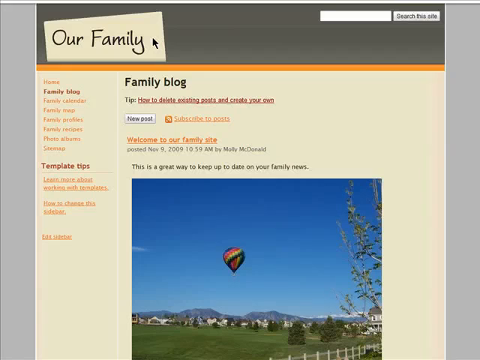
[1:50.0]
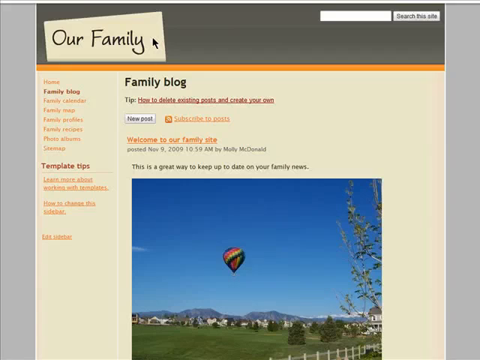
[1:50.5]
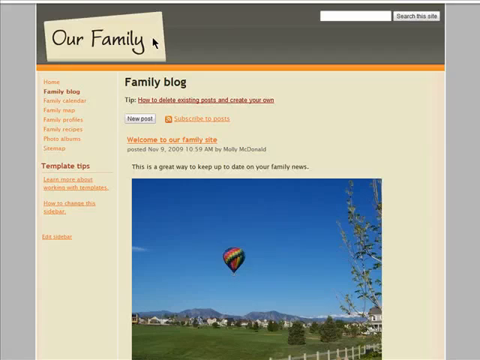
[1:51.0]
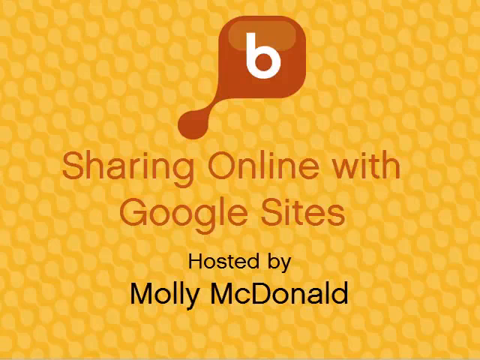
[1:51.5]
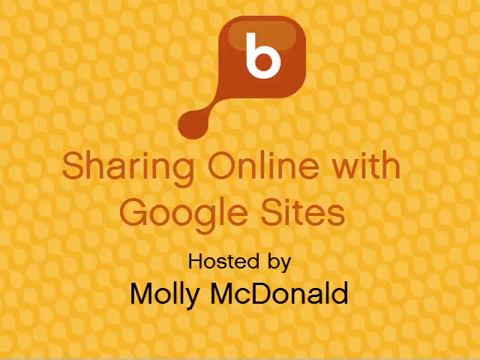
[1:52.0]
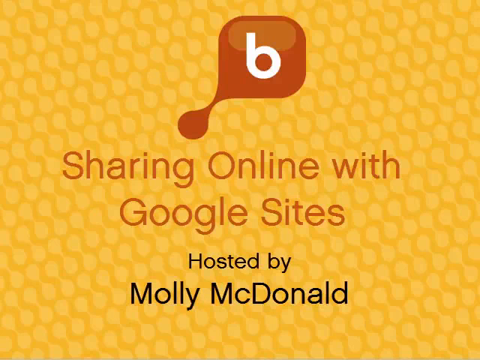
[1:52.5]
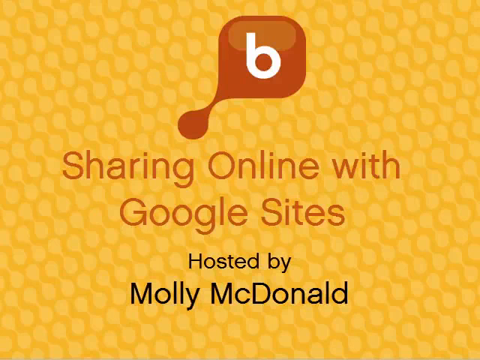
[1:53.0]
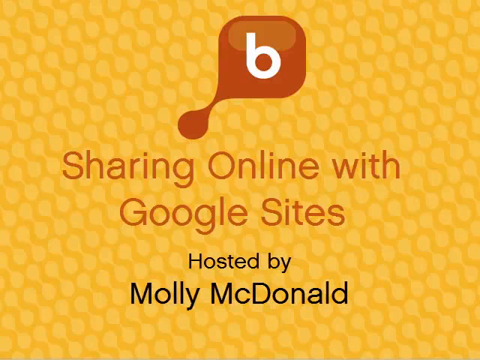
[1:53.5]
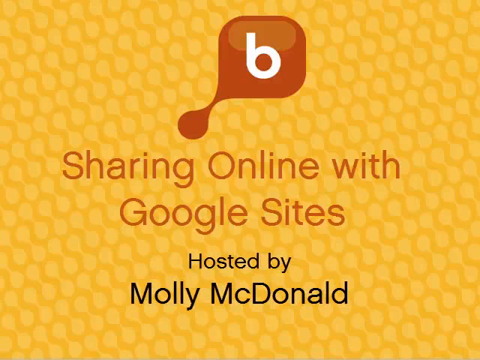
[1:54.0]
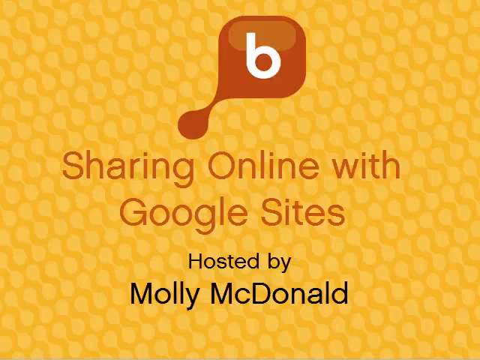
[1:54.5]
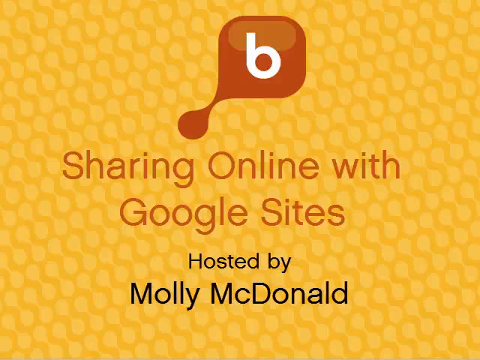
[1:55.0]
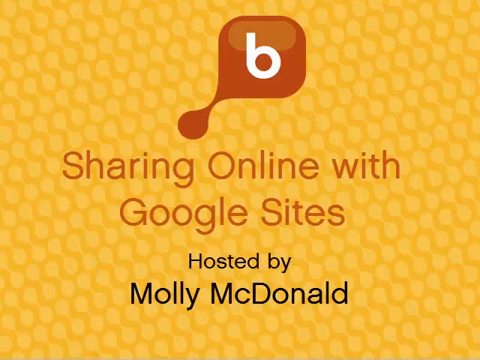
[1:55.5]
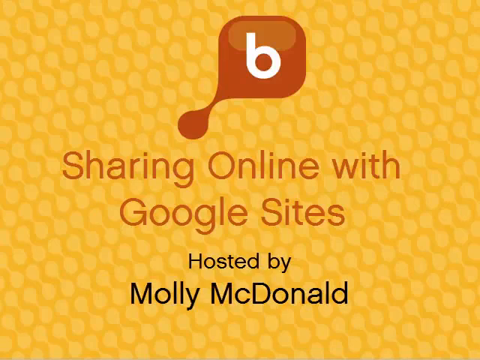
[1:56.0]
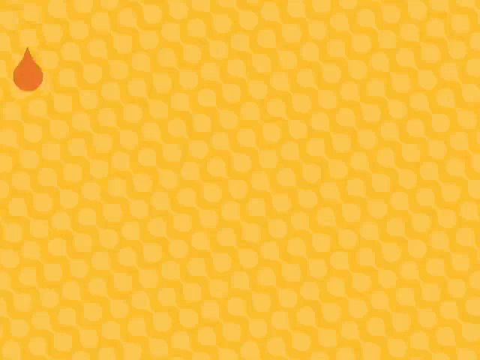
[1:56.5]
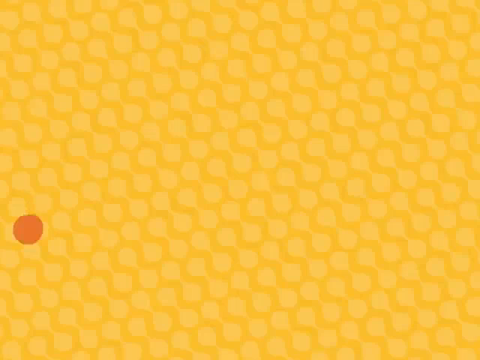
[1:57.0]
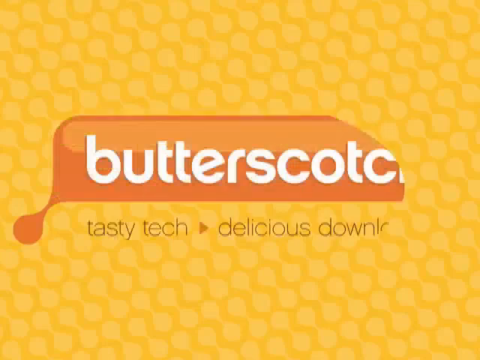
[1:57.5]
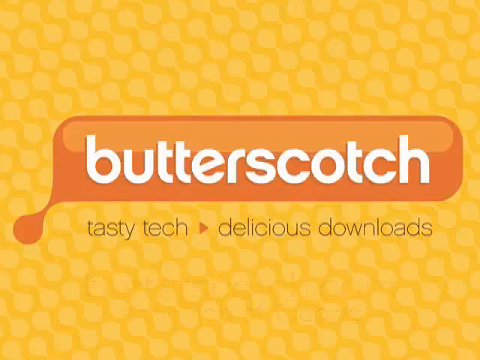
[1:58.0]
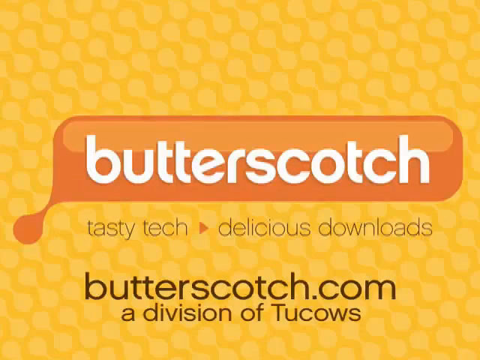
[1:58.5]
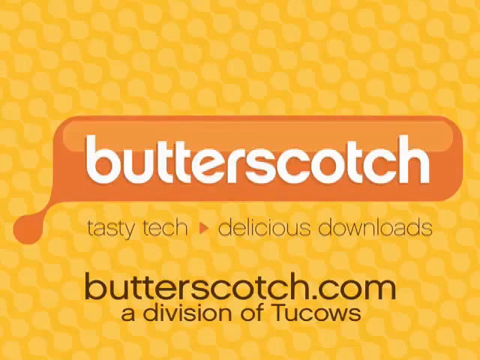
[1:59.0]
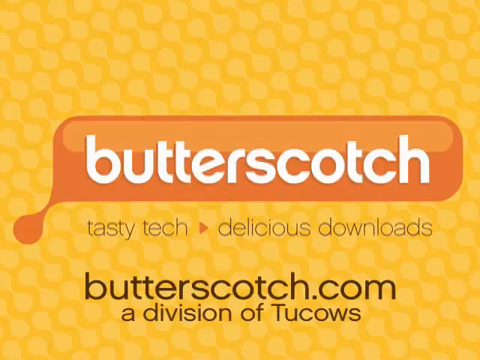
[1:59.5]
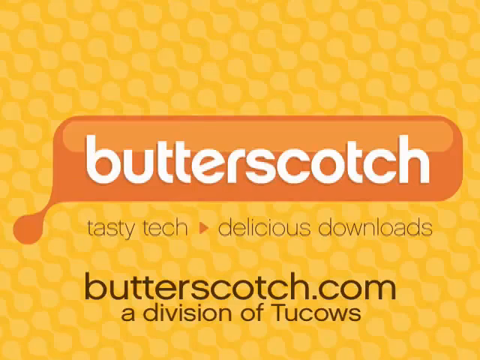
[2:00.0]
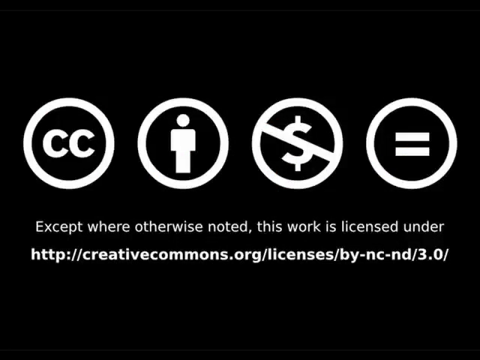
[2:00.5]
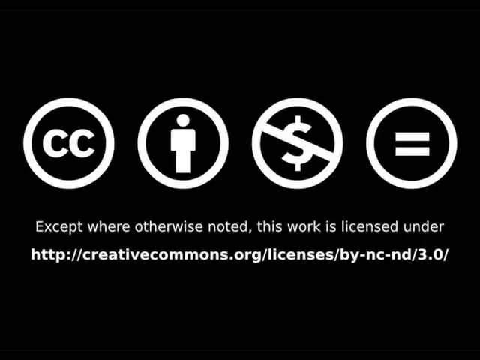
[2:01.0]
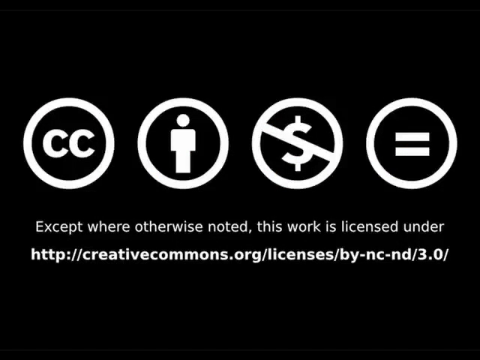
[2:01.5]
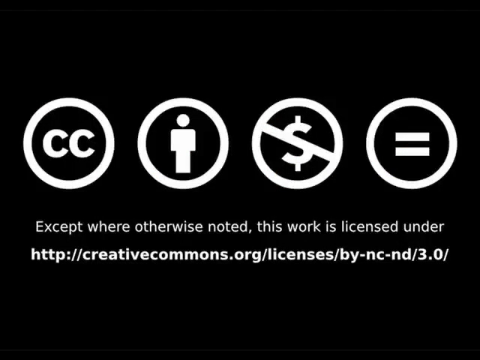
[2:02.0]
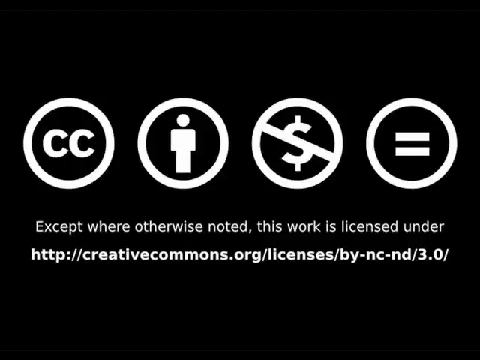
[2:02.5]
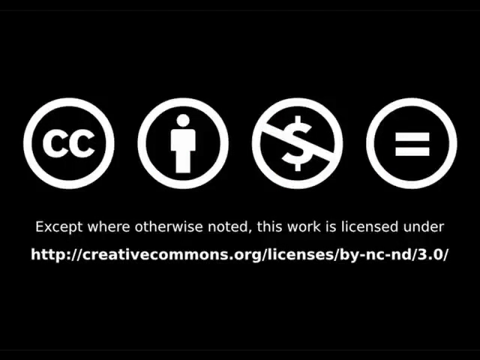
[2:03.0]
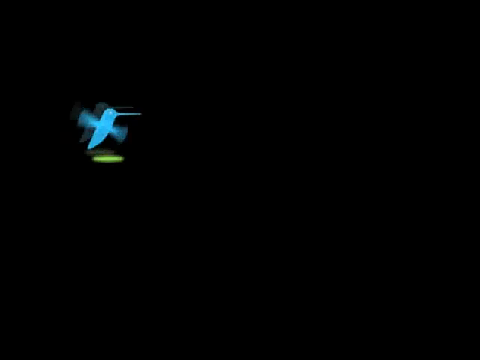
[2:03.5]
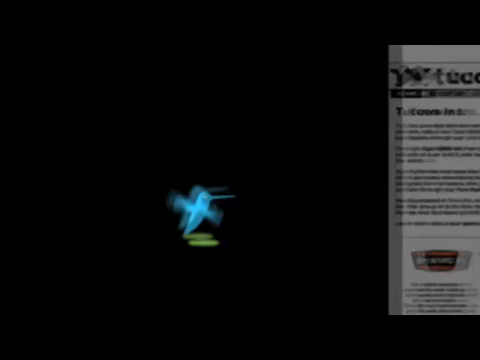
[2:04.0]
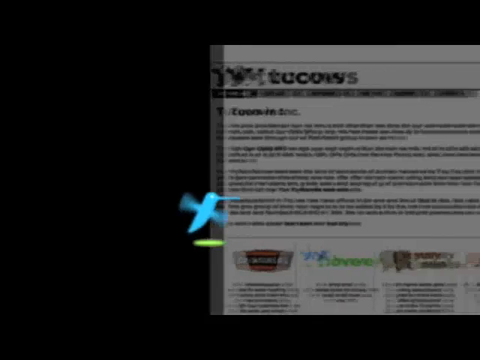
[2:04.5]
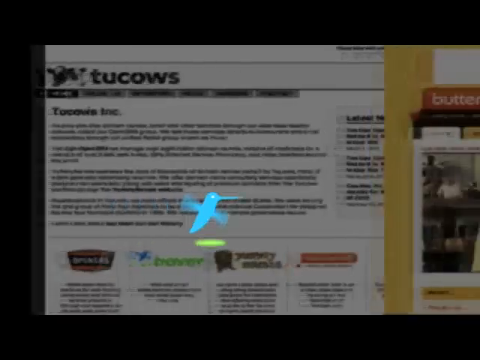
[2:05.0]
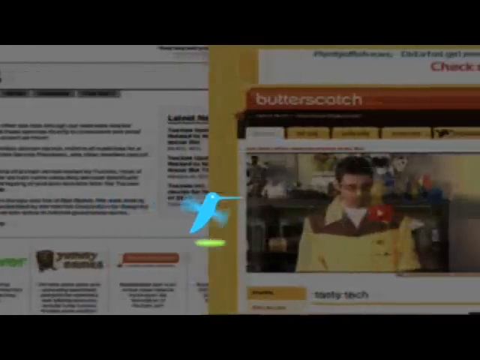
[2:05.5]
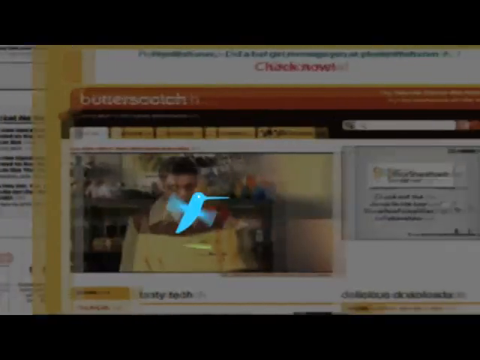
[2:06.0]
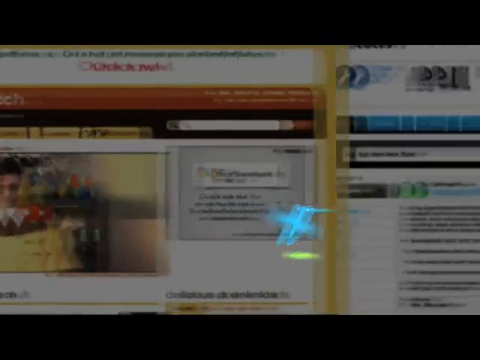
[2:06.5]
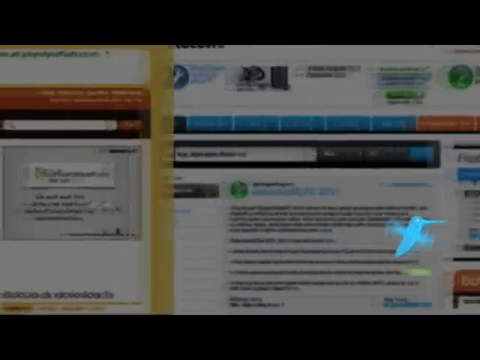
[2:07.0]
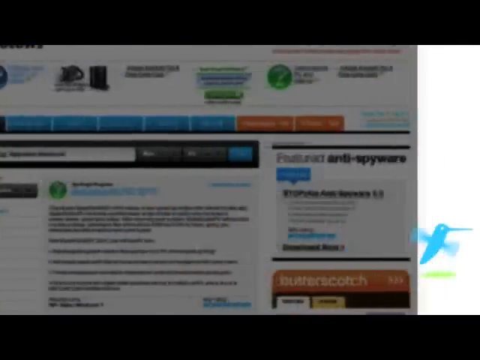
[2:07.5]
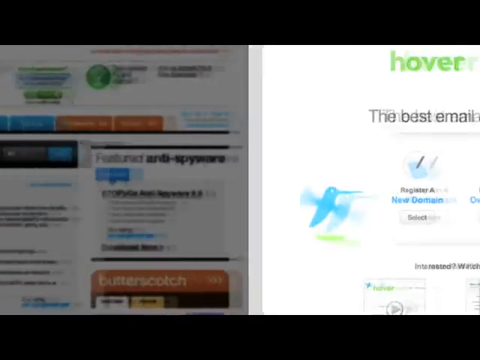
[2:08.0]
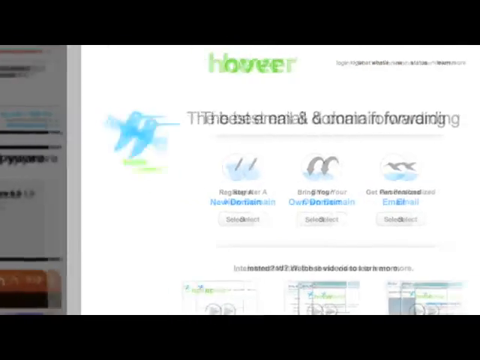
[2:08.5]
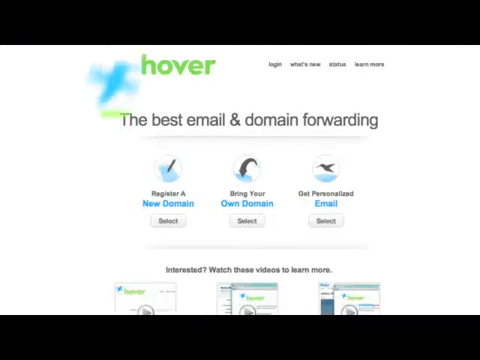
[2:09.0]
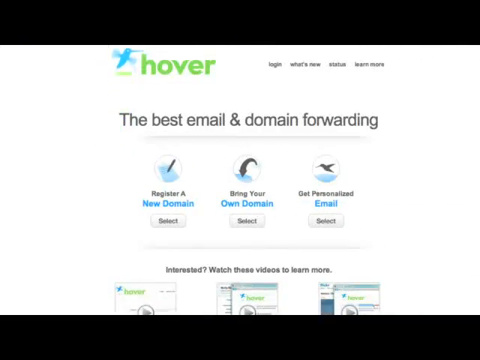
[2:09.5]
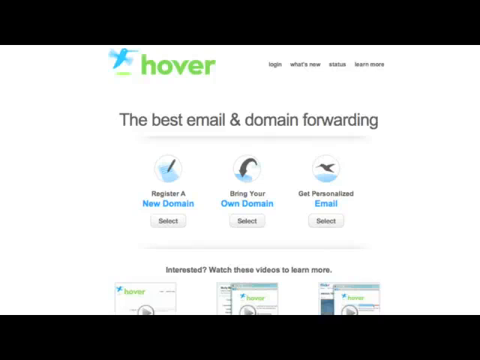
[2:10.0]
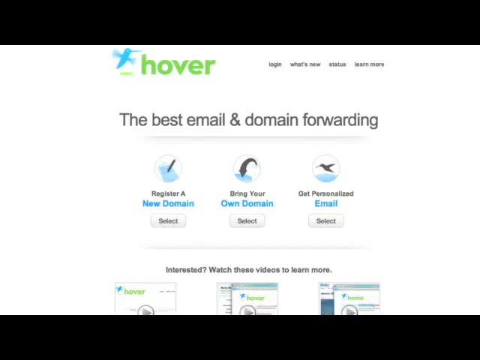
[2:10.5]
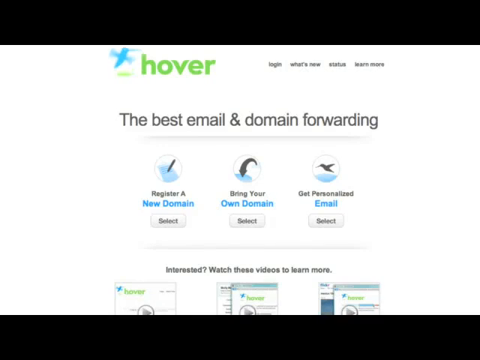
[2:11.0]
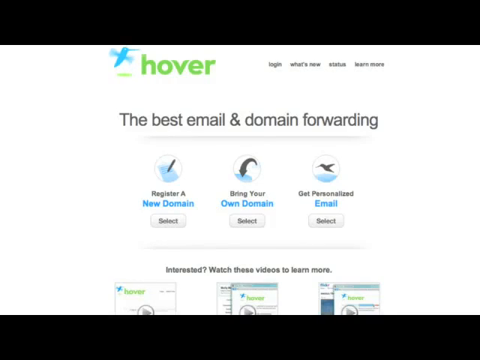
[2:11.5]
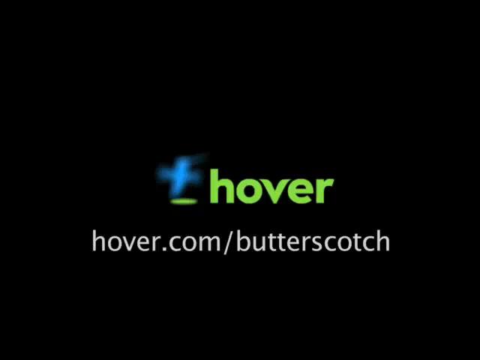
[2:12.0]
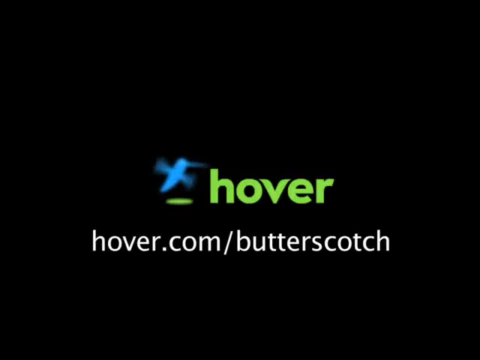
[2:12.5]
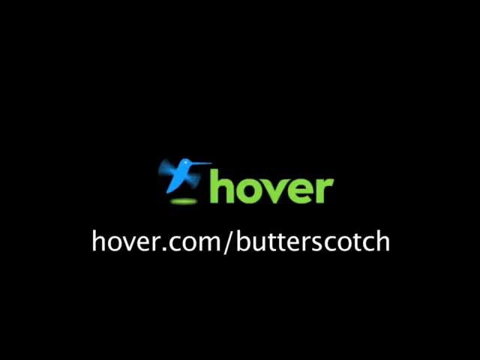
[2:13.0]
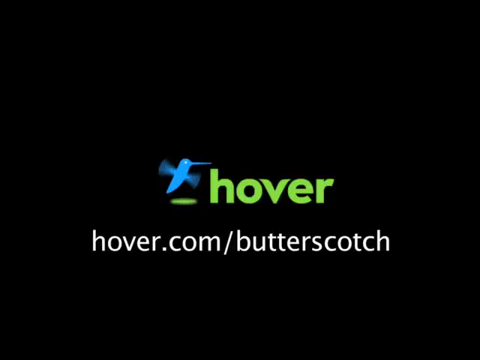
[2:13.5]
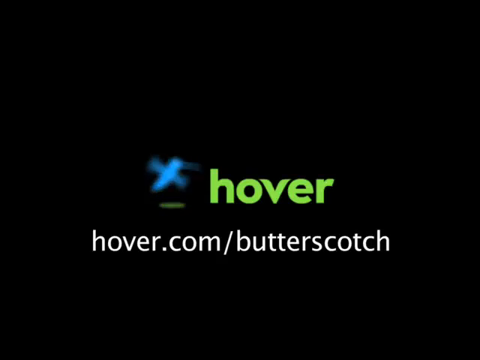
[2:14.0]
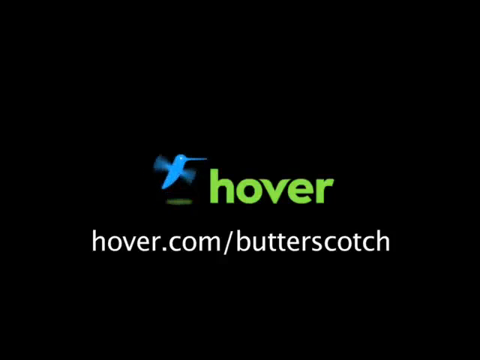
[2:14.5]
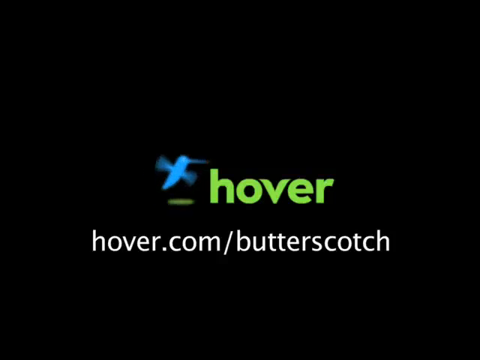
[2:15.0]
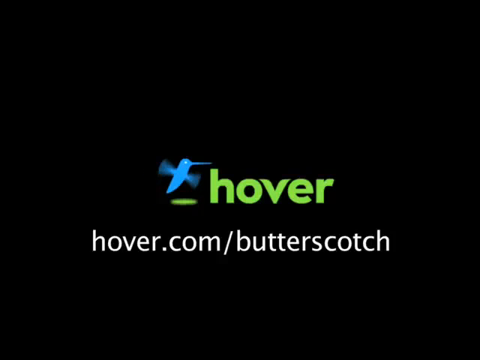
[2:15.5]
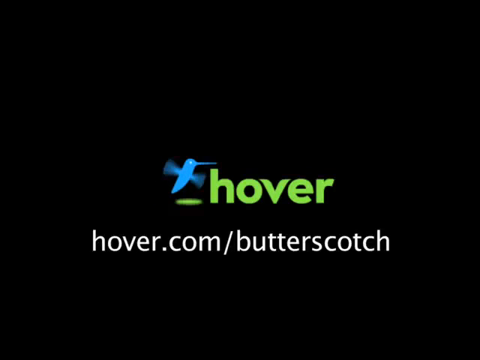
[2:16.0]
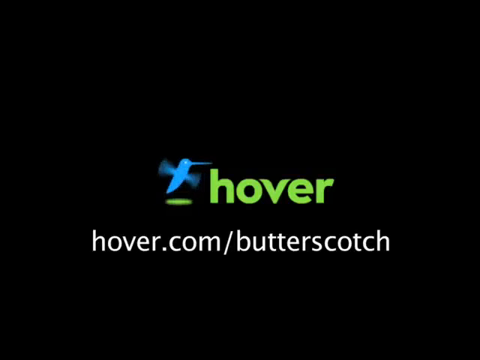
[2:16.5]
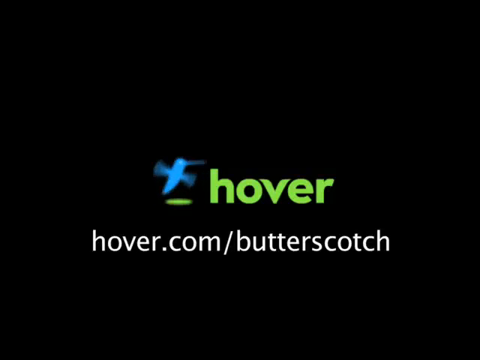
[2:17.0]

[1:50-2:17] The family blog page is shown. Underneath the title is a tip reading "how to delete existing posts and create your own," apparently on the back end. The arrow hovers over "our family," and then the video quickly moves to the next page with the yellow backdrop, whose design kind of resembles a honeycomb, and the letter B inside a square-ish bubble. Underneath, centered, is "sharing online with Google Sites," in the same color as the backdrop of the bubble, and beneath that "hosted by Molly MacDonald." The next slide reads "butterscotch" within the bubble backdrop, with "Tasty Tech, delicious downloads" underneath, followed by what seems to be a website, "butterscotch.com, a division of Tucows." Another window then shows a series of icons and another URL.